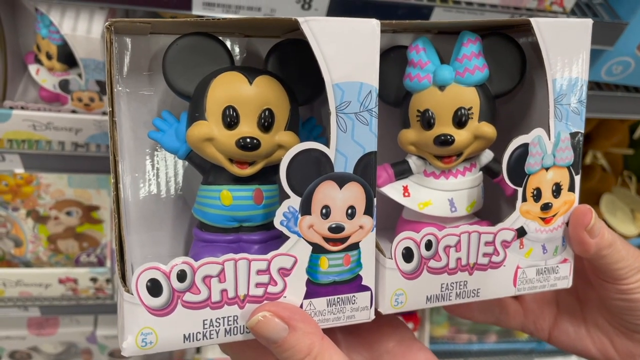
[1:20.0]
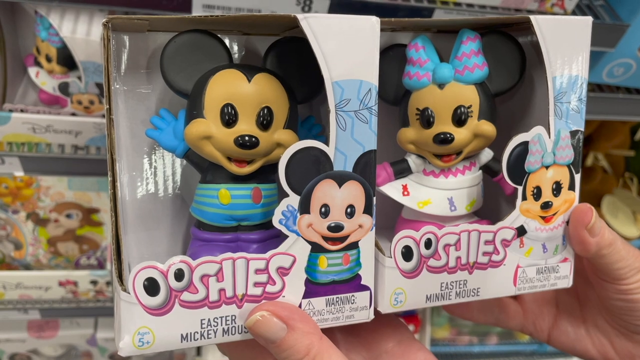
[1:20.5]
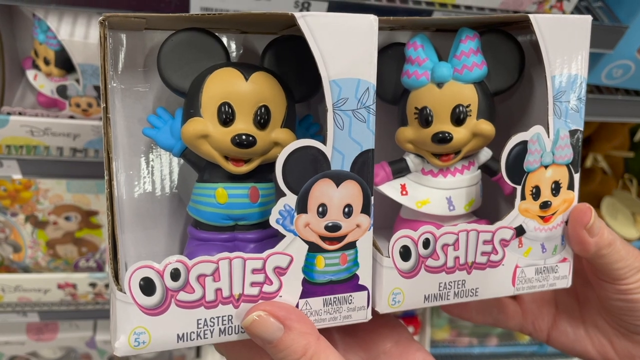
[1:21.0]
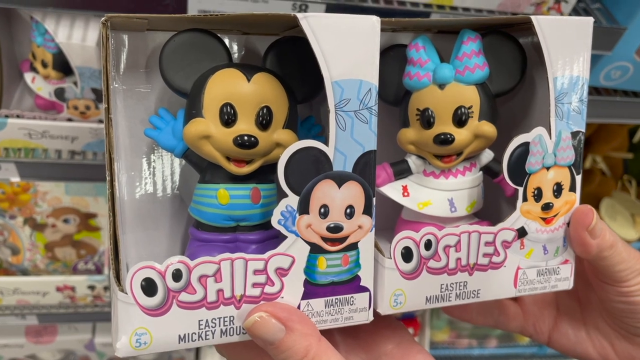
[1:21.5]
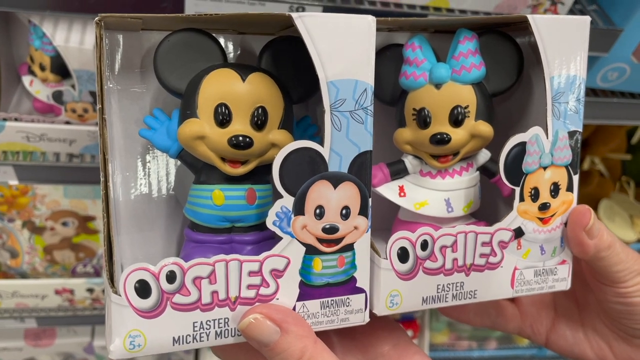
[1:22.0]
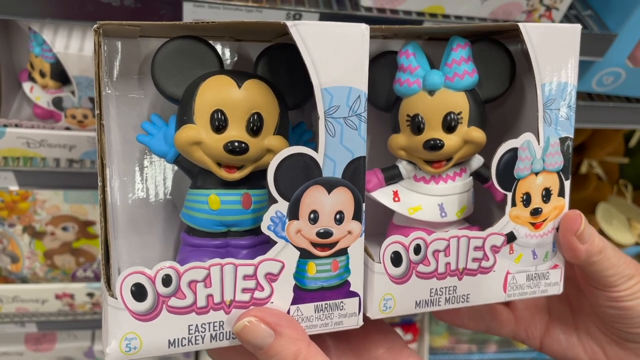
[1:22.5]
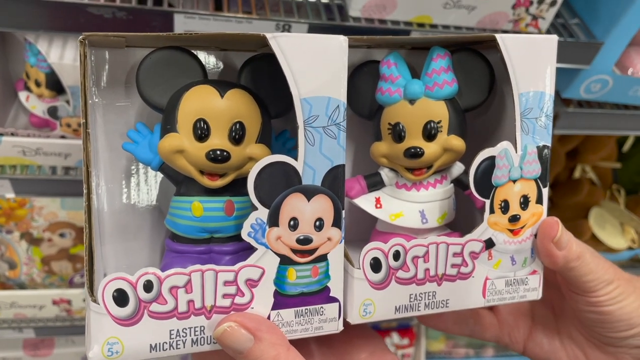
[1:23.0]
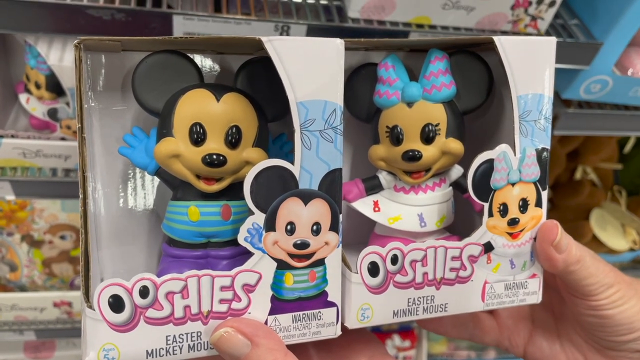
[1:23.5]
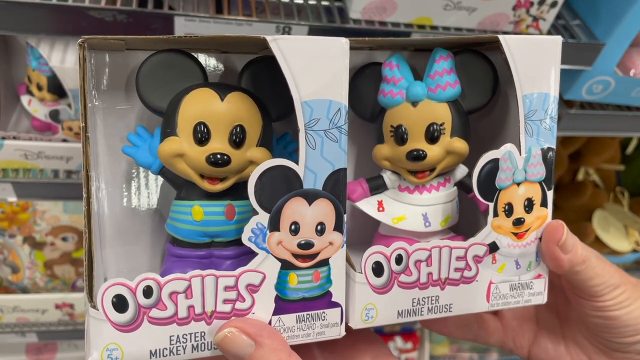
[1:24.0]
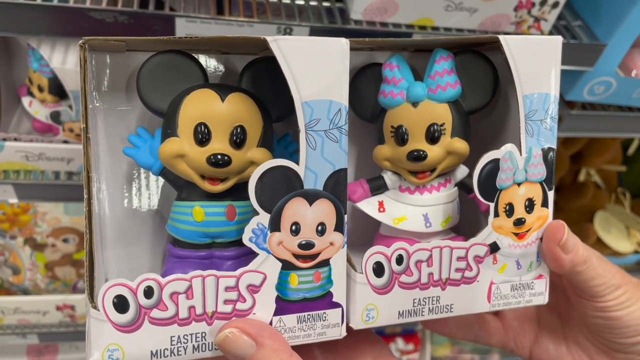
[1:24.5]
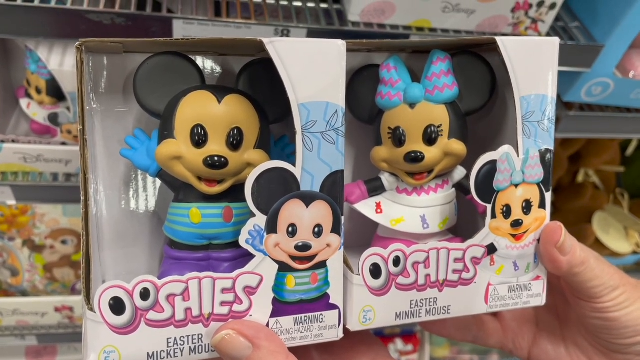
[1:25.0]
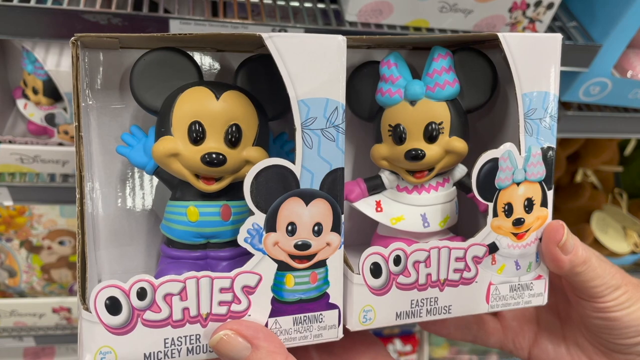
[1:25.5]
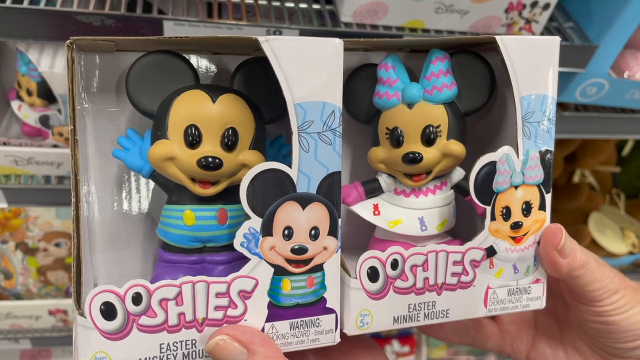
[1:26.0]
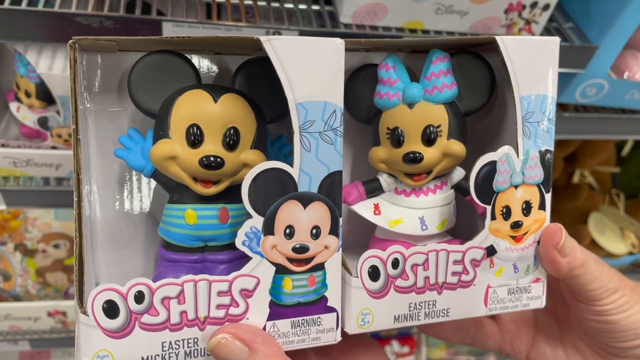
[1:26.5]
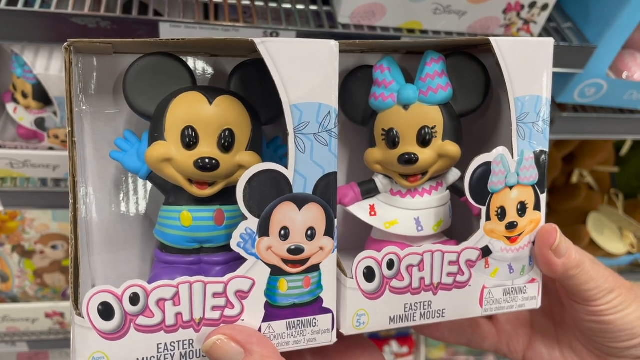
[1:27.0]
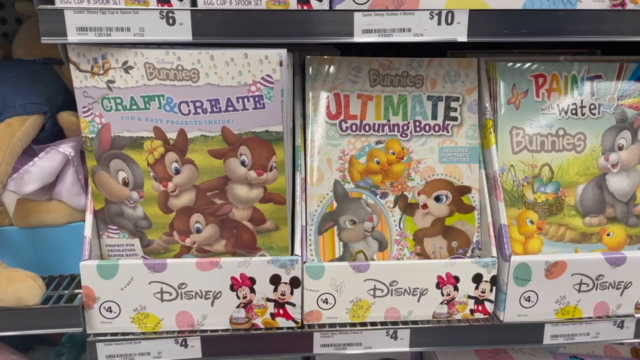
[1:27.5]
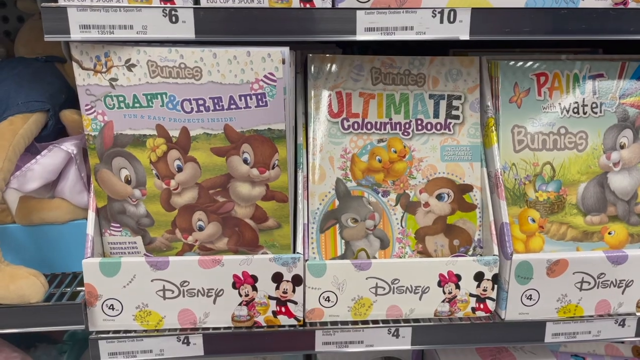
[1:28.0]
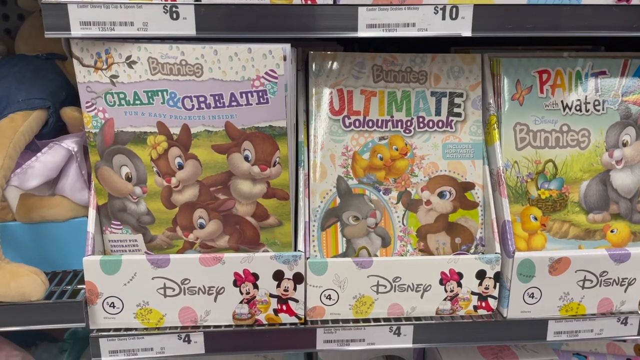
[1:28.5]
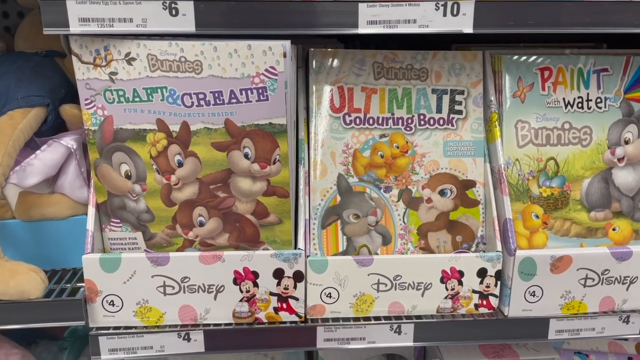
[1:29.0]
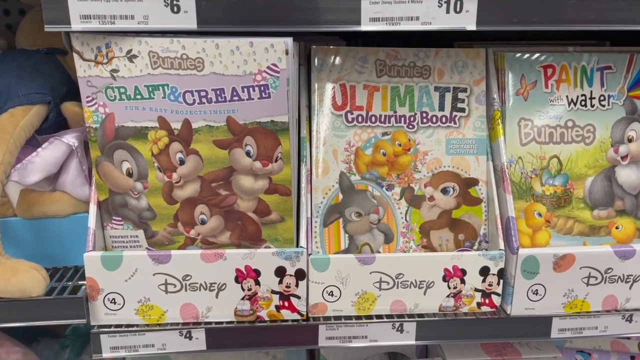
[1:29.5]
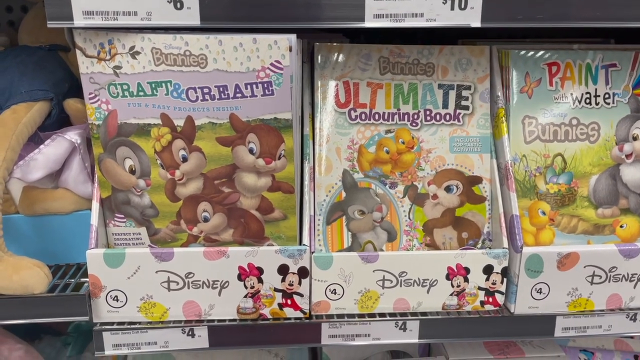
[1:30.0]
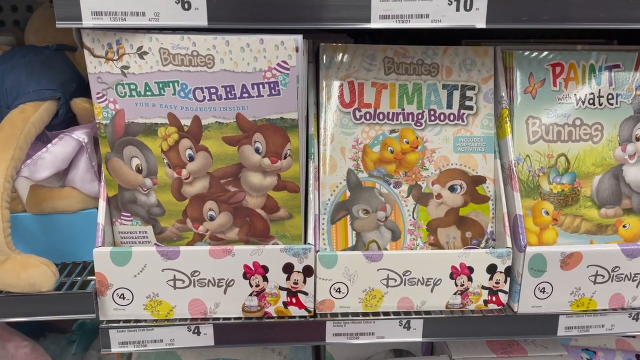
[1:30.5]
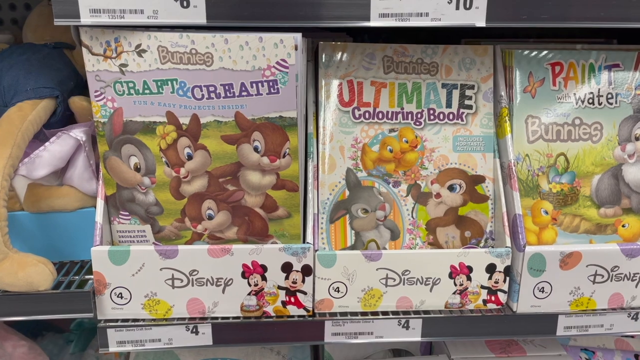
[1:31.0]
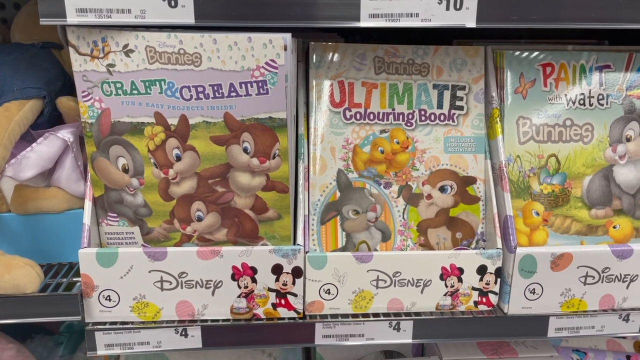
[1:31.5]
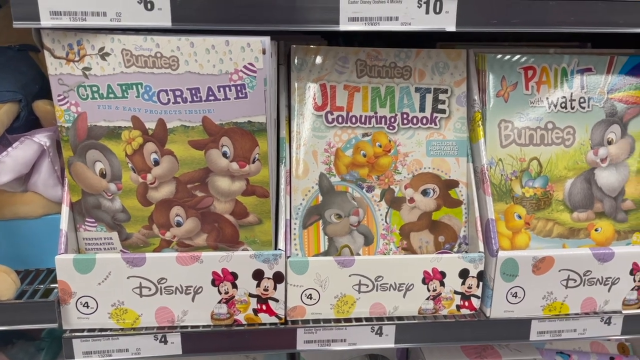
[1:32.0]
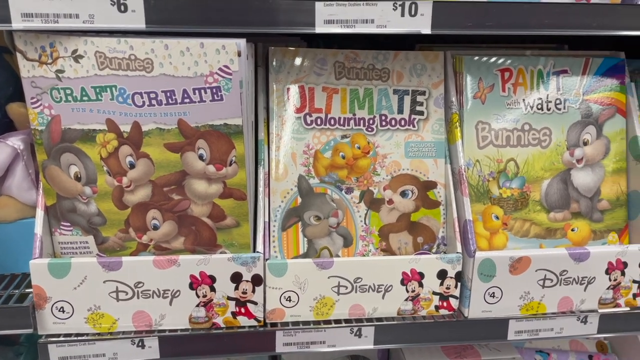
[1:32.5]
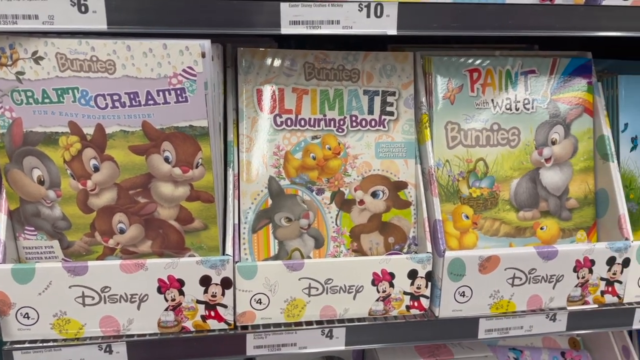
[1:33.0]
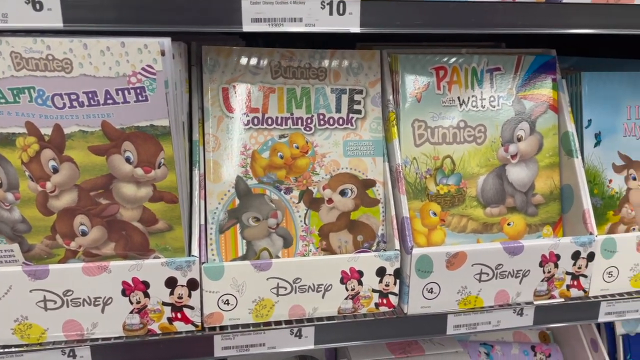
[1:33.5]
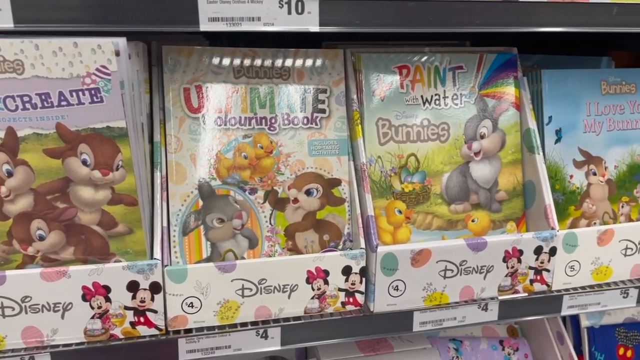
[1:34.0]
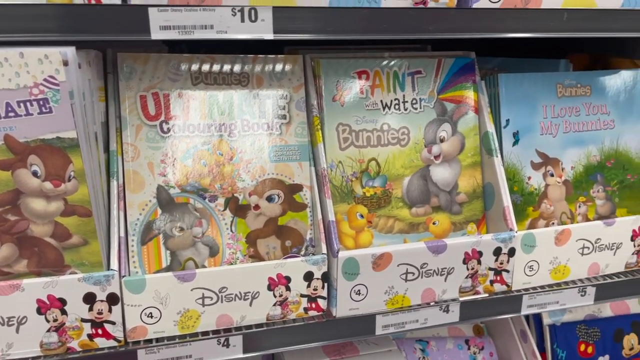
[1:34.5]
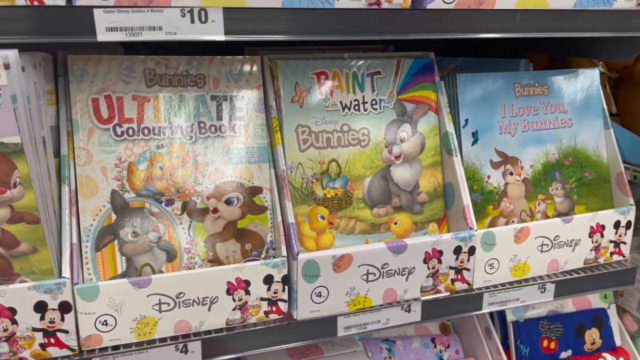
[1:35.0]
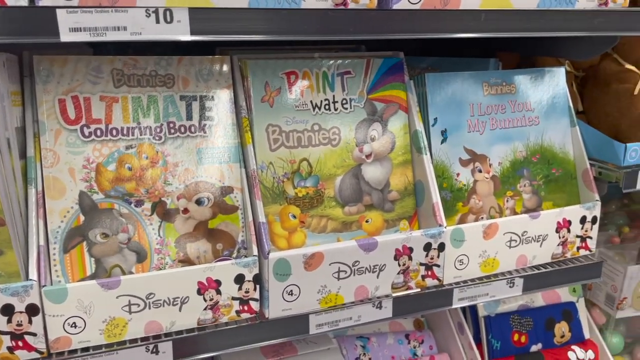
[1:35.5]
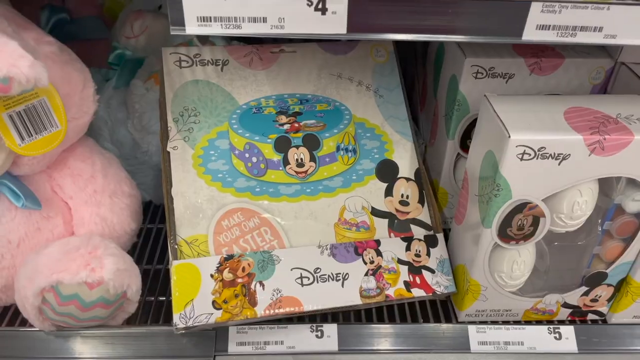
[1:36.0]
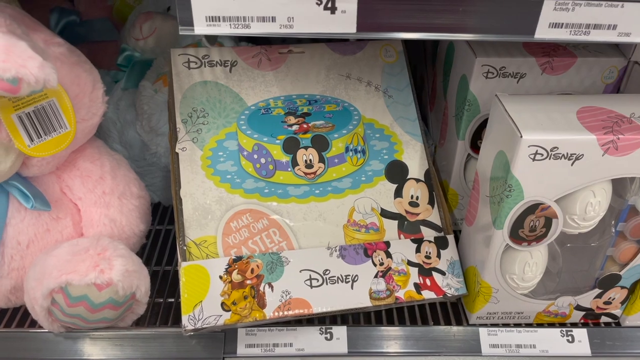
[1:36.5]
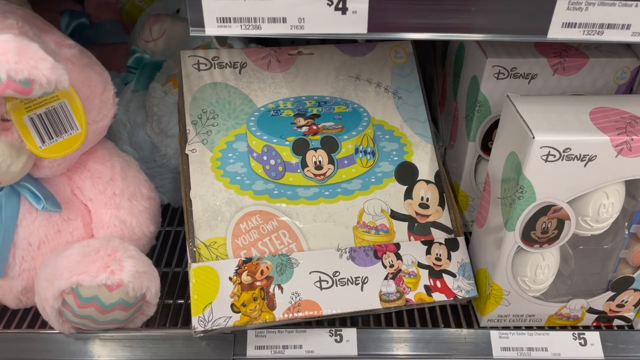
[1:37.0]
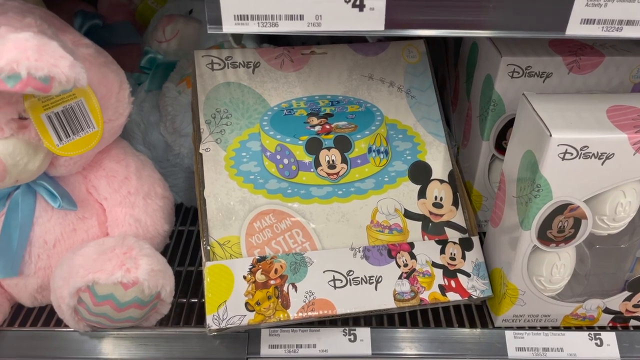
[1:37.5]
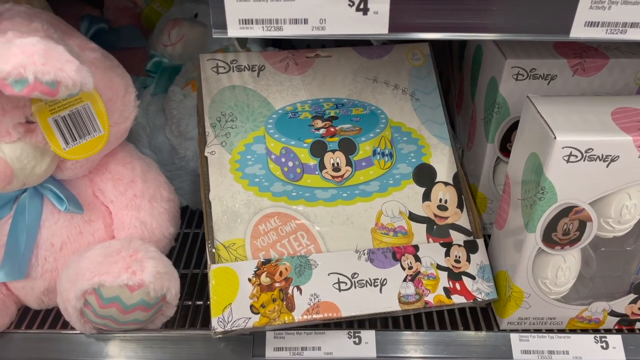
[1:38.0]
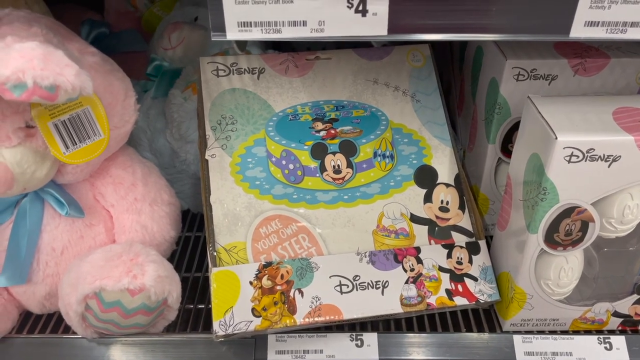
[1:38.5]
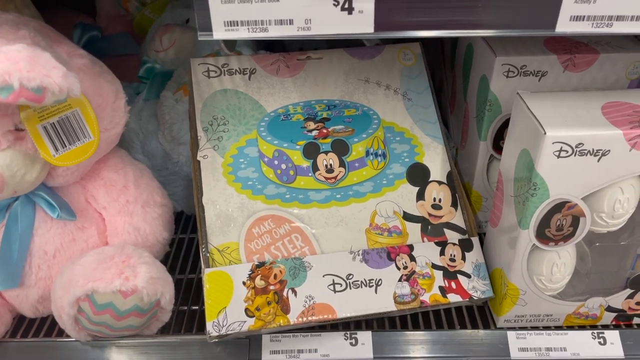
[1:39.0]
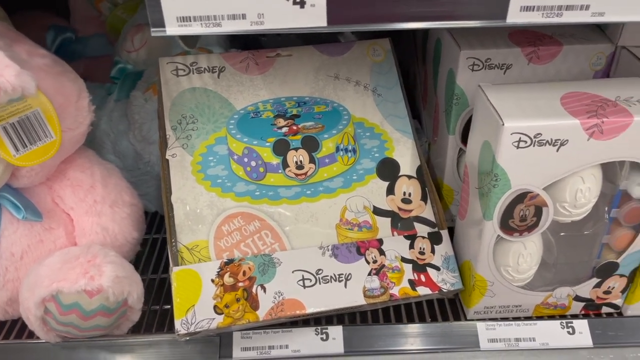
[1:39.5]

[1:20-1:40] The person holds both the Ooshies Minnie and Mickey Easter-themed products and seems to be looking closely at them. The scene then changes to Disney-themed coloring or crafting books featuring bunnies, including a bunnies ultimate coloring book and a bunnies craft and create book, with the Disney logo on them. Other products in a Disney book are shown, maybe including Care Bears or a plushie. The camera moves to different aisles of the toy section.